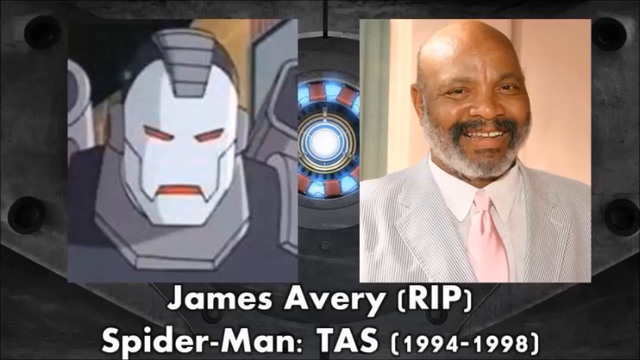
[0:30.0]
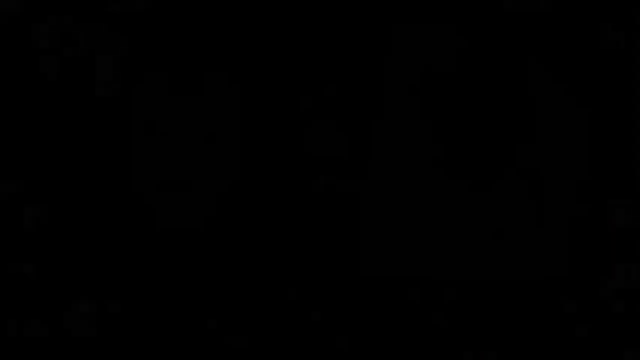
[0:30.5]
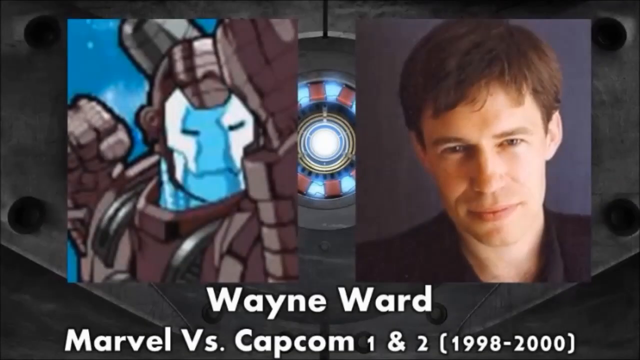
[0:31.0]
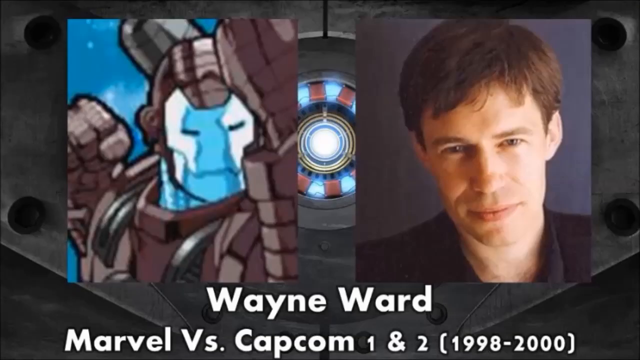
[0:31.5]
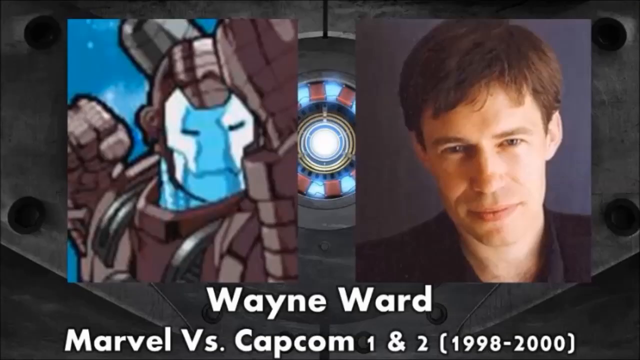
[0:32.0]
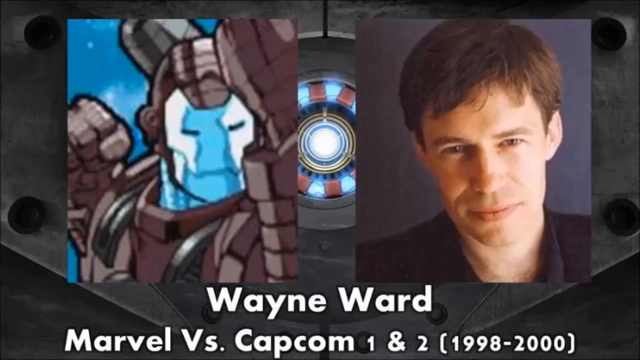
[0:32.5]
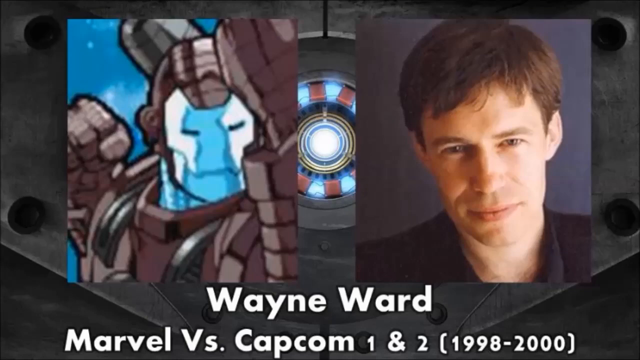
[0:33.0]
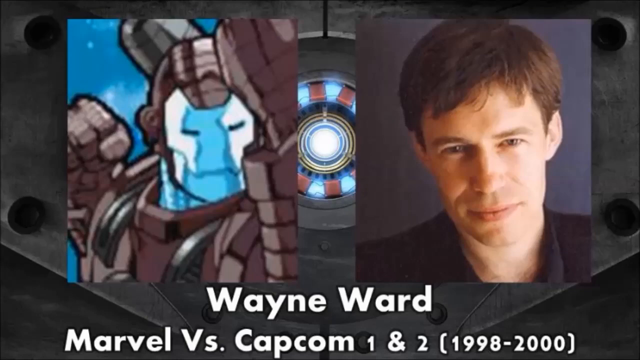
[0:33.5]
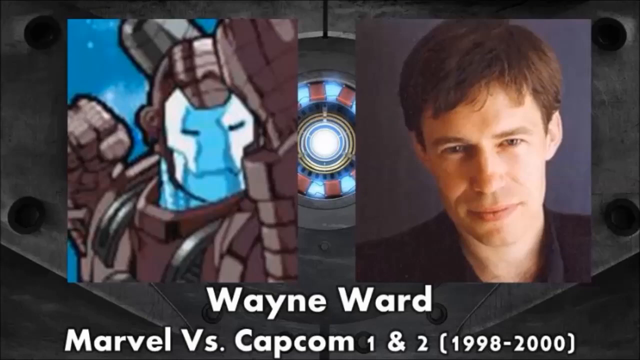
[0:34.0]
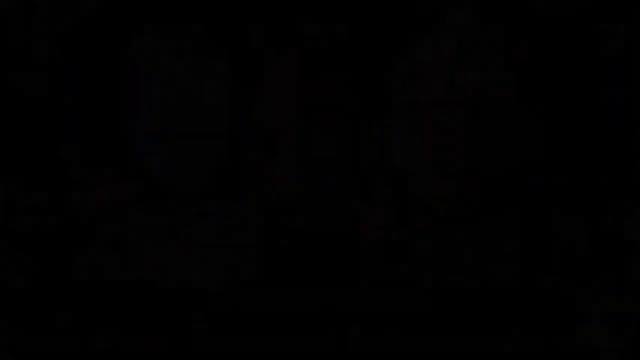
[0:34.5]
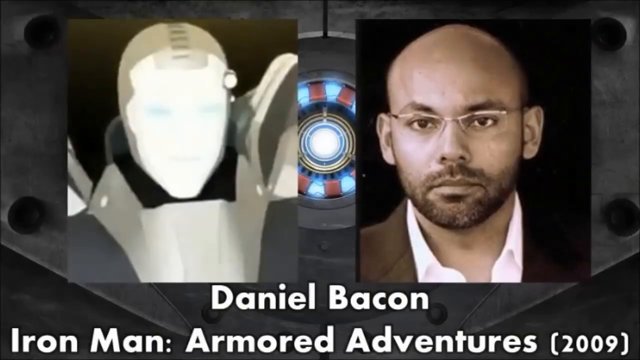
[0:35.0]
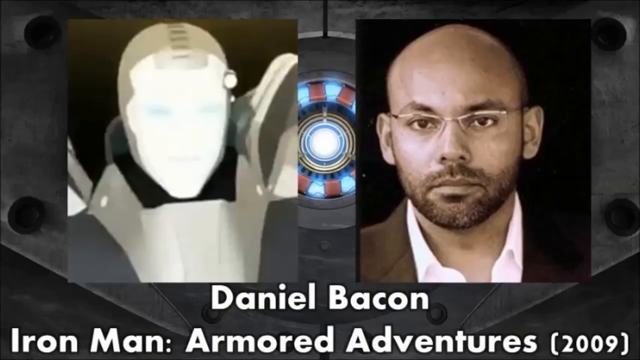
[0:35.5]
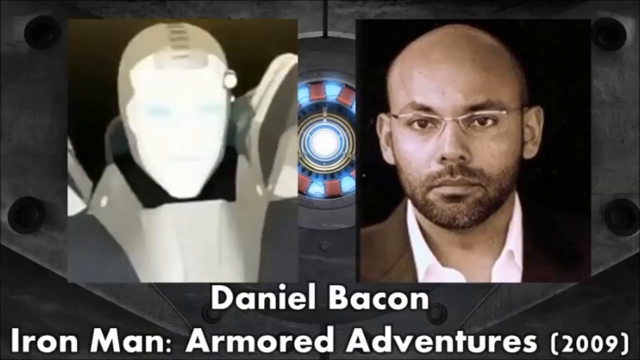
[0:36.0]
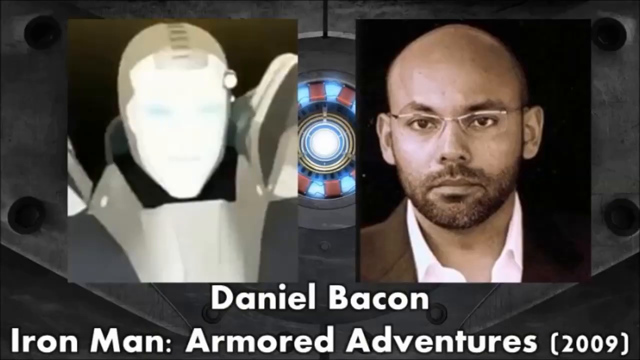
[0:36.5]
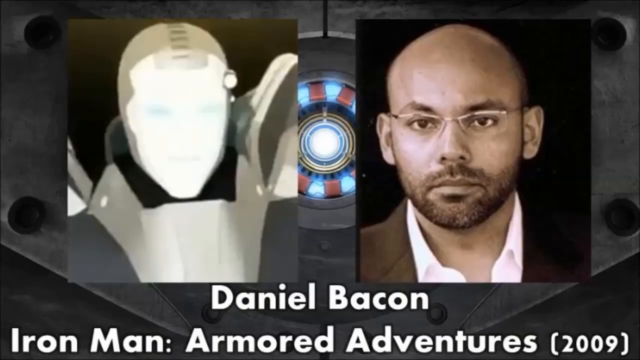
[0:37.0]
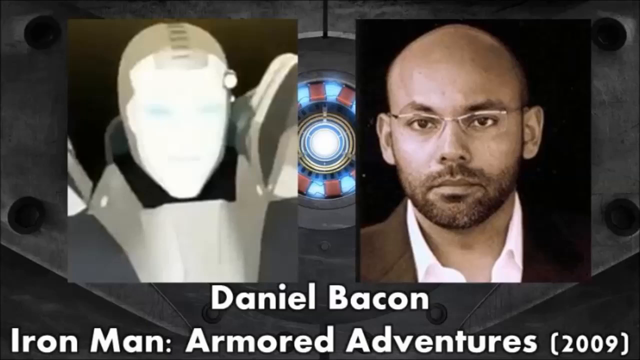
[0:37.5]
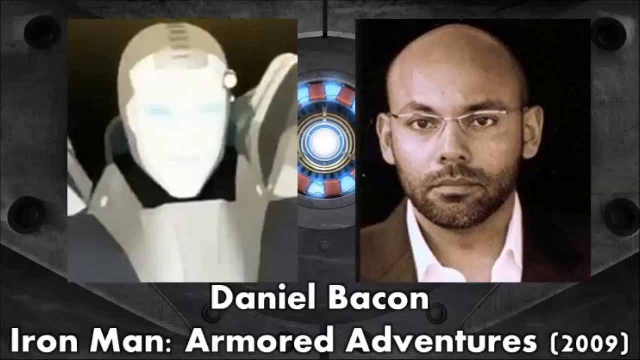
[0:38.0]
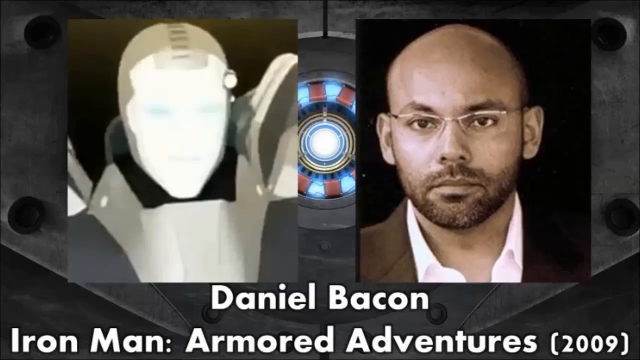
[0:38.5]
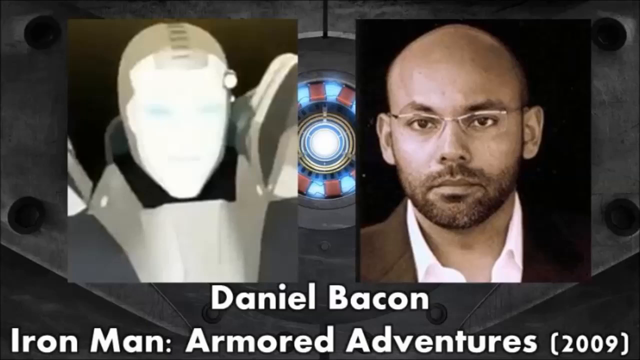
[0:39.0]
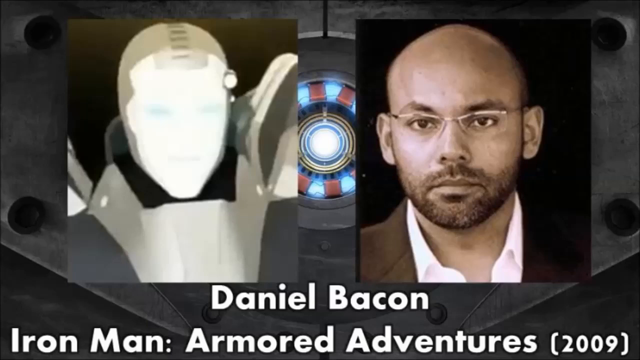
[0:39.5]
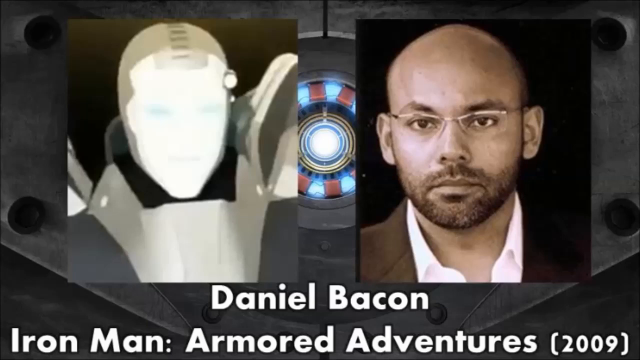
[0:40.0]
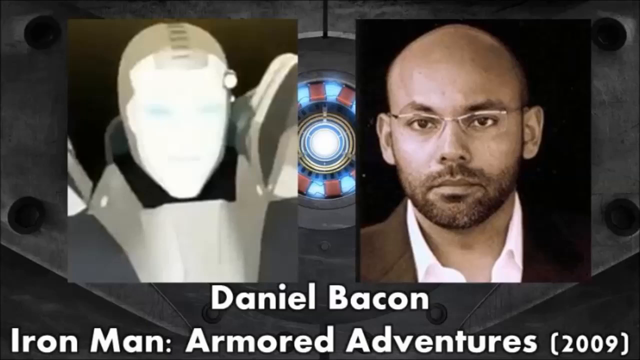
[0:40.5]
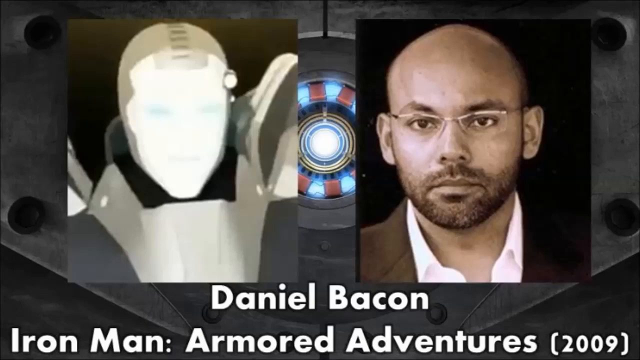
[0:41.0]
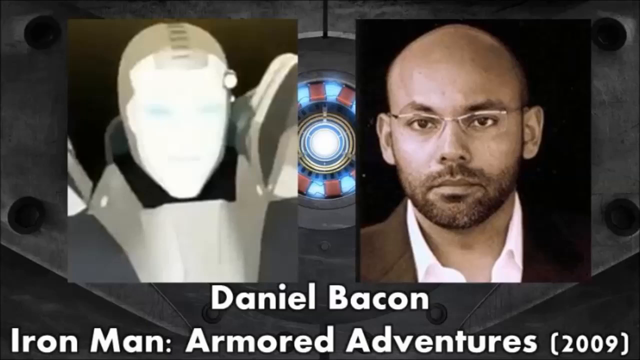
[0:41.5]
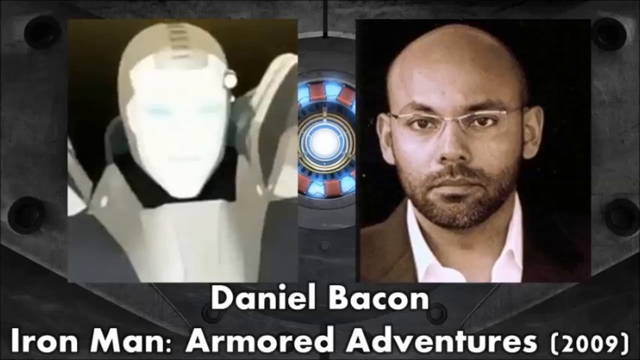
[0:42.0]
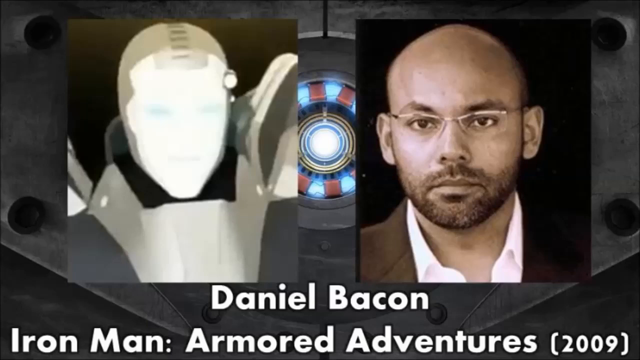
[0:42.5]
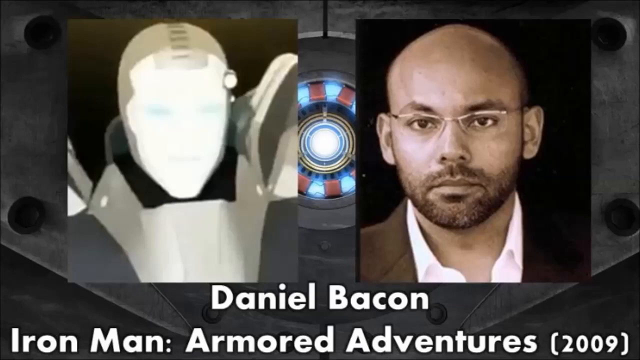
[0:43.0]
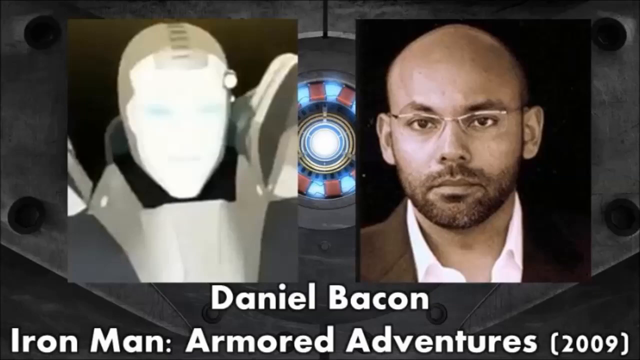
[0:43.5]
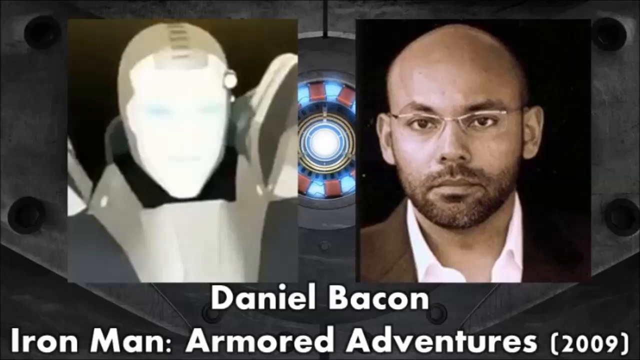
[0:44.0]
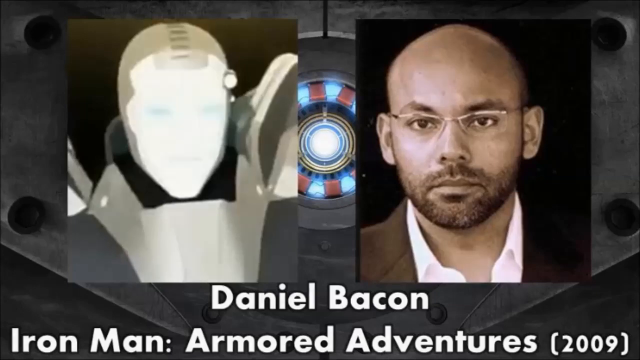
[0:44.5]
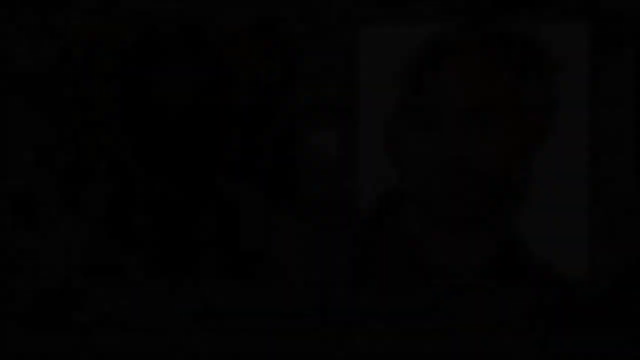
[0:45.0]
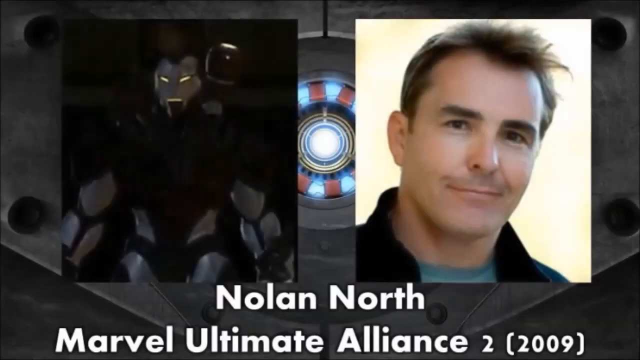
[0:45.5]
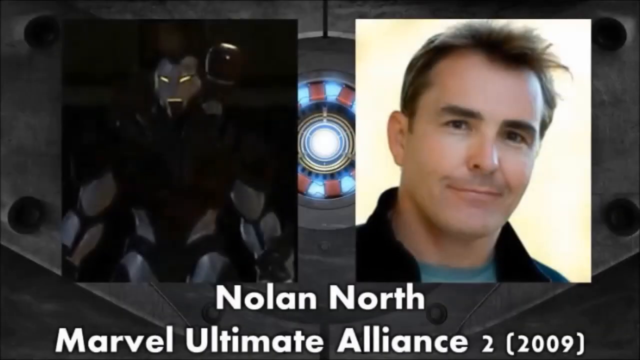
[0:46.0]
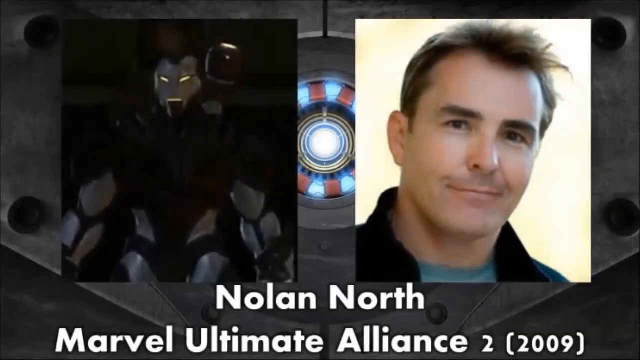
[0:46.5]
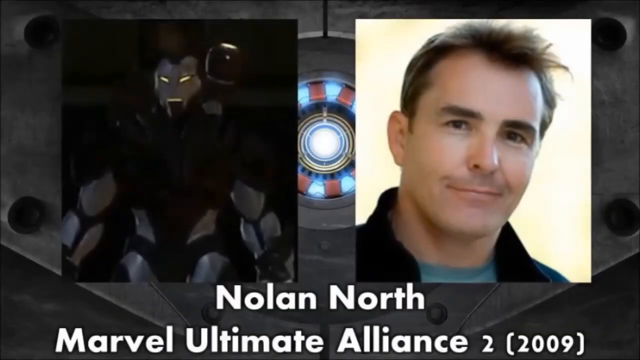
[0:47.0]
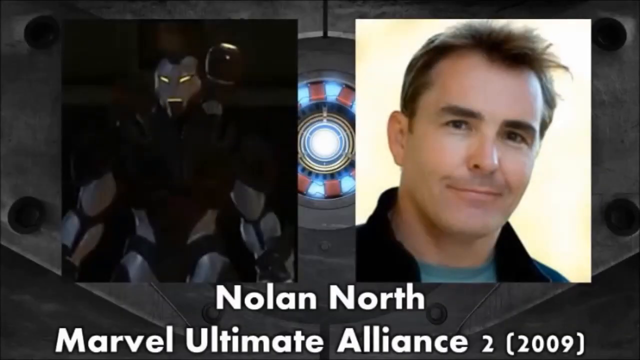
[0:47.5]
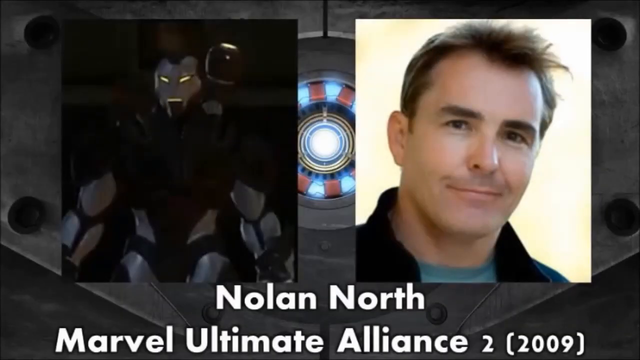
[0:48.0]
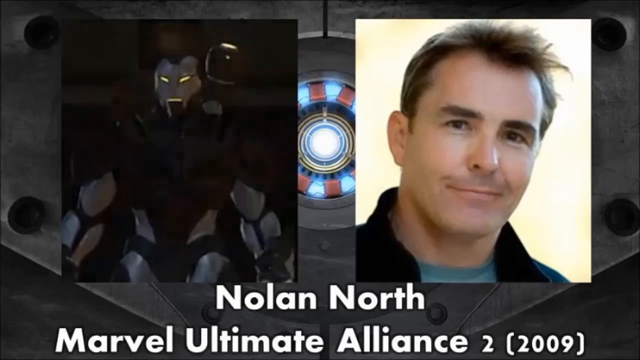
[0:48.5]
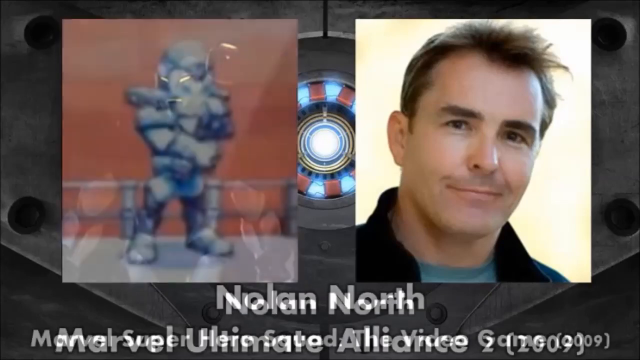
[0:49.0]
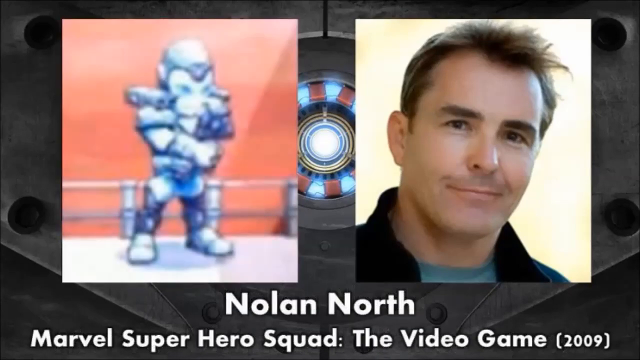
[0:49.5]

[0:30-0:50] The scene shows Iron Man's main source of power, the thing in the middle of his chest, in the background, with two images of James Avery, who had passed on, and an image of the character he played on the left side. The video cuts to another scene where two images pop up of a man named Wayne Ward, associated with the first and second Marvel vs Capcom games, in 1998 and 2008; on the left side is his character, Iron Man in a wetsuit. Next comes Daniel Bacon, from the Avengers in 2009, with his character on the left-hand side, which looks like a robot, and on the right-hand side a picture of him, an Indian man with glasses and a full beard. Then there is a shot of Nolan Moore, from Marvel Ultimate Alliance 2 in 2006, with his character on the left-hand side, which looks like an earlier version of the Iron Man known now, and on the right-hand side a picture of him, a white man, smiling. Another image of his character follows.